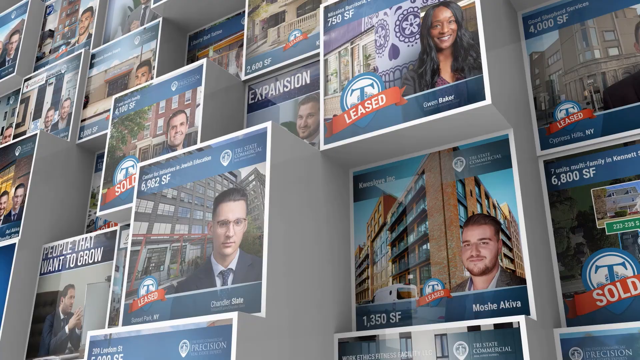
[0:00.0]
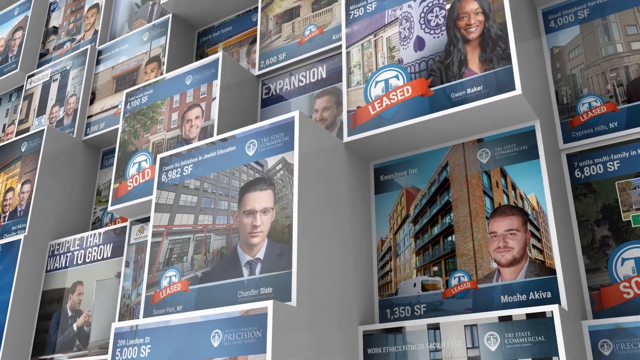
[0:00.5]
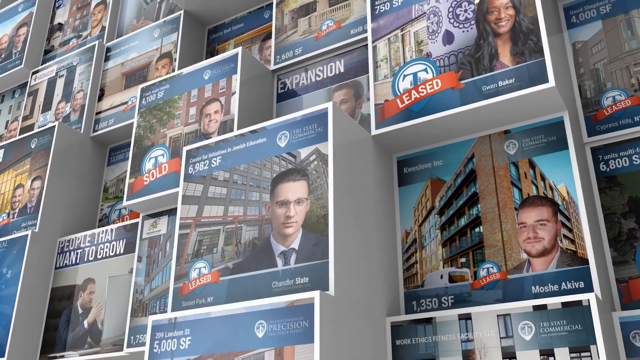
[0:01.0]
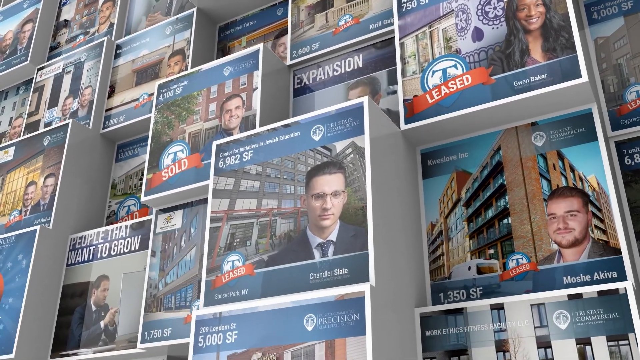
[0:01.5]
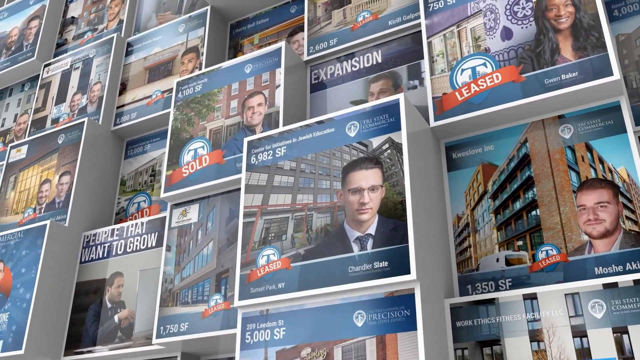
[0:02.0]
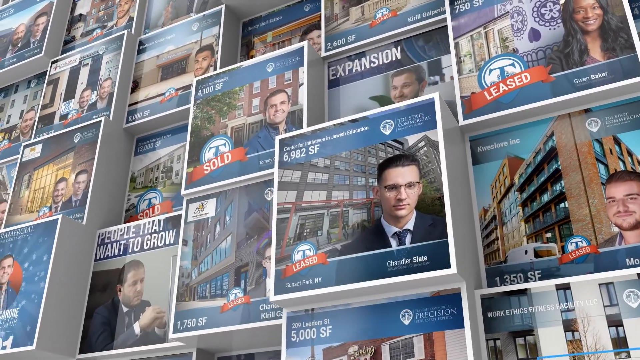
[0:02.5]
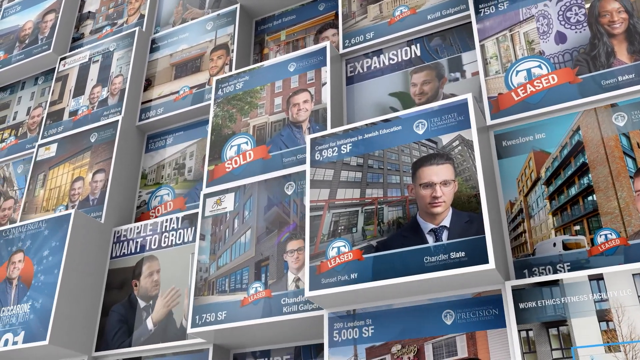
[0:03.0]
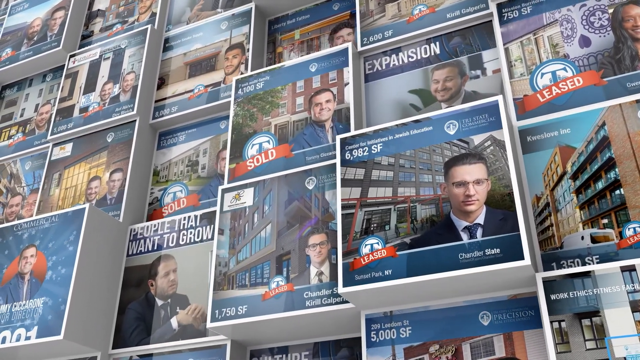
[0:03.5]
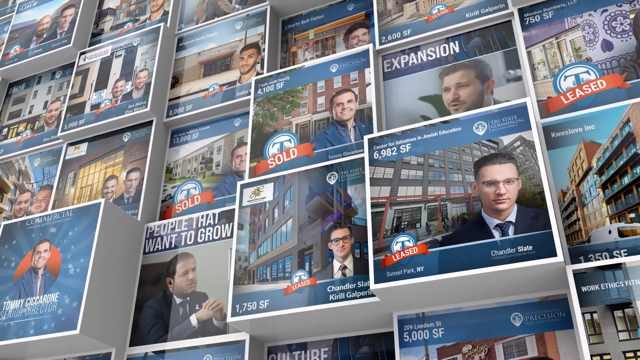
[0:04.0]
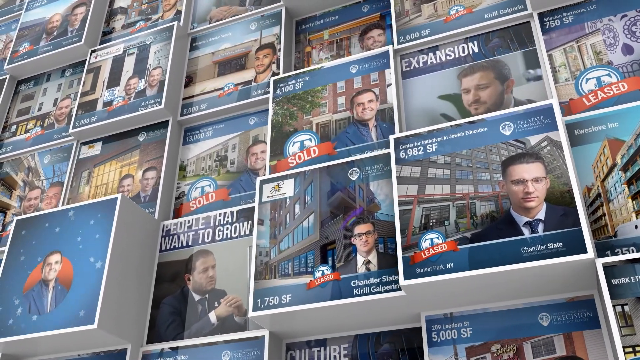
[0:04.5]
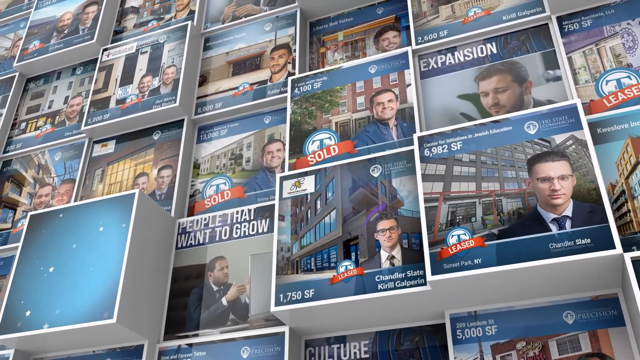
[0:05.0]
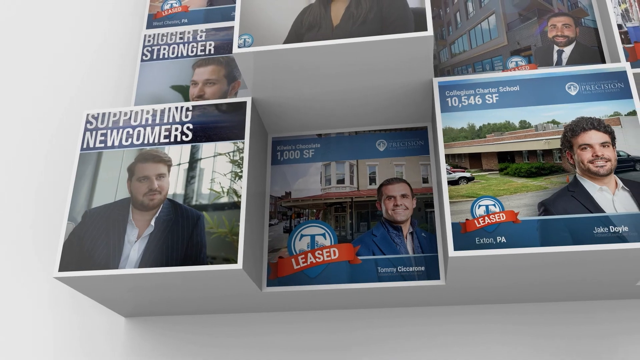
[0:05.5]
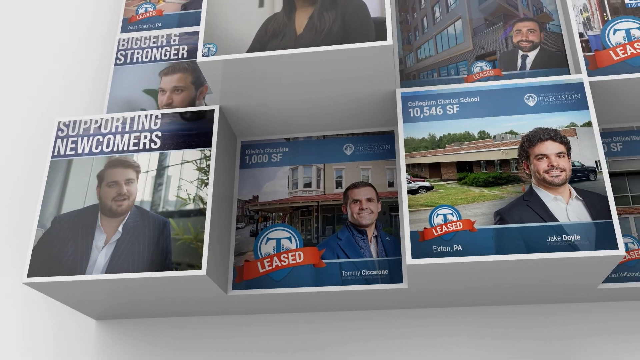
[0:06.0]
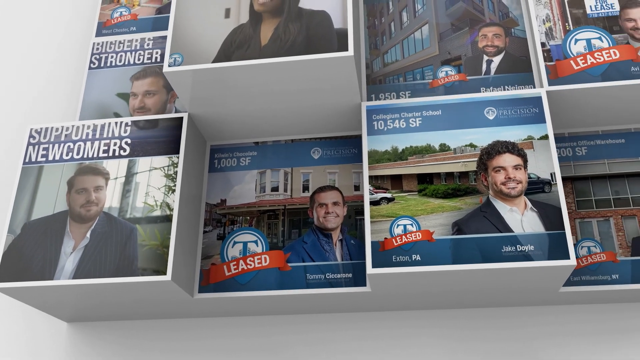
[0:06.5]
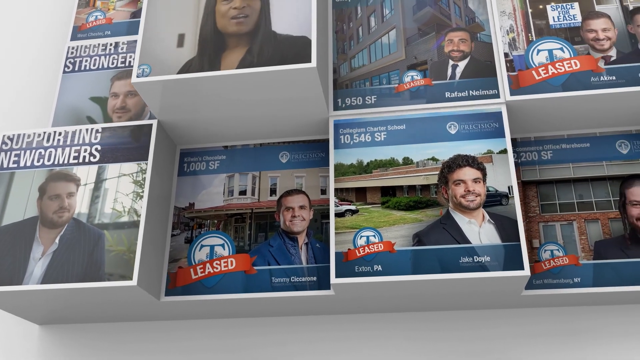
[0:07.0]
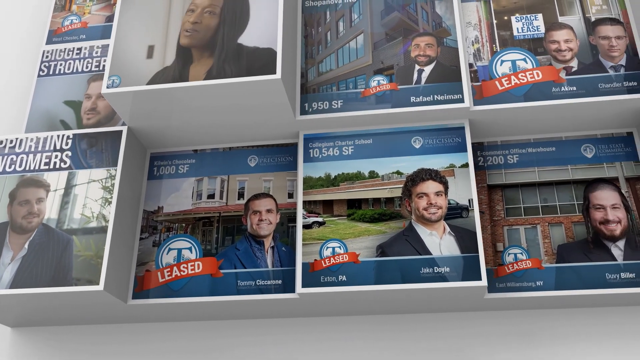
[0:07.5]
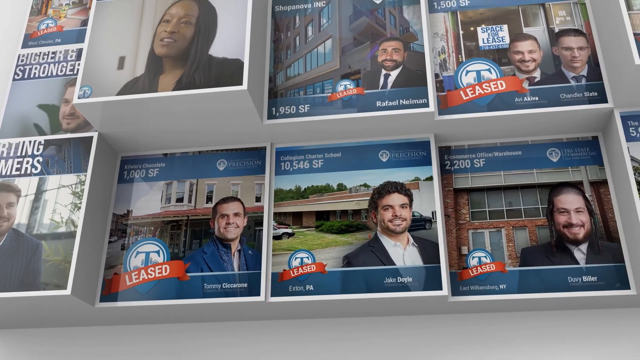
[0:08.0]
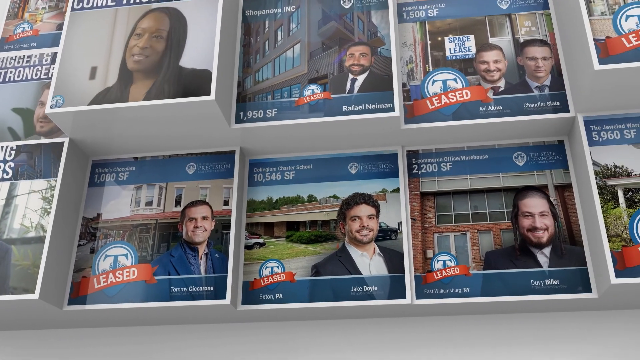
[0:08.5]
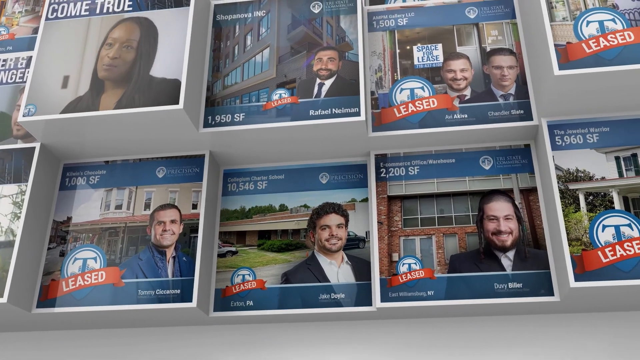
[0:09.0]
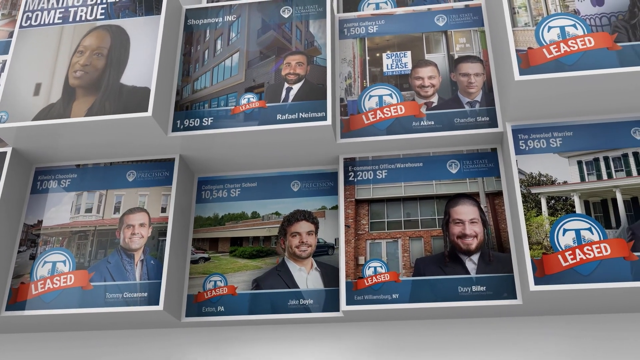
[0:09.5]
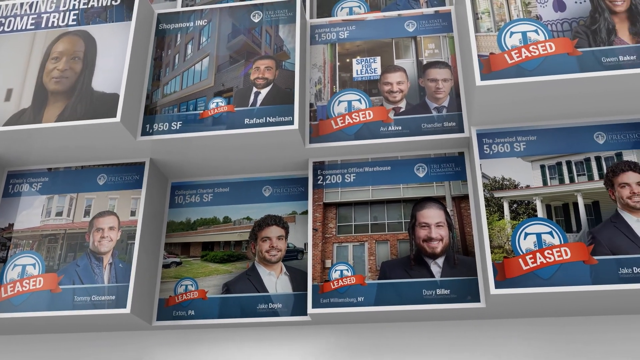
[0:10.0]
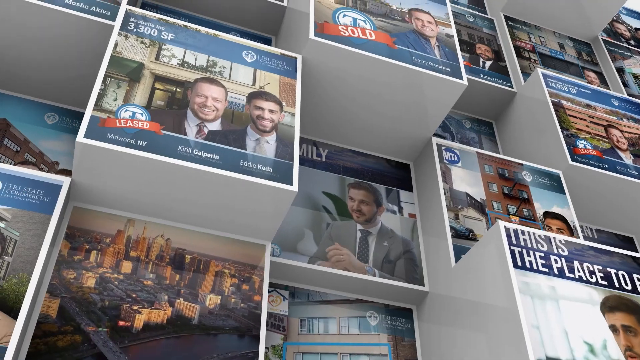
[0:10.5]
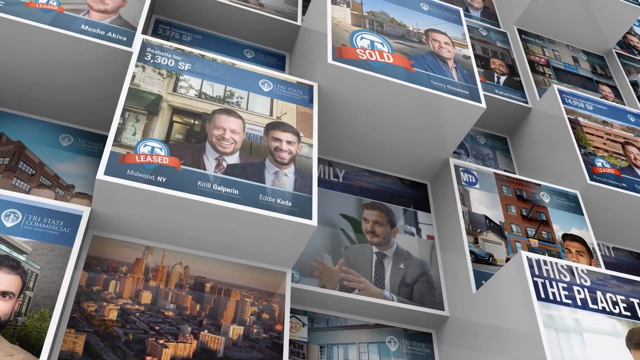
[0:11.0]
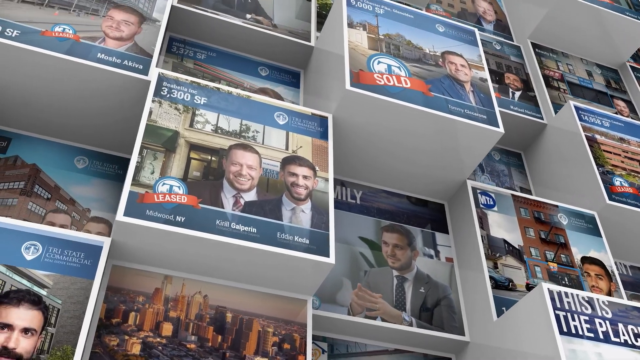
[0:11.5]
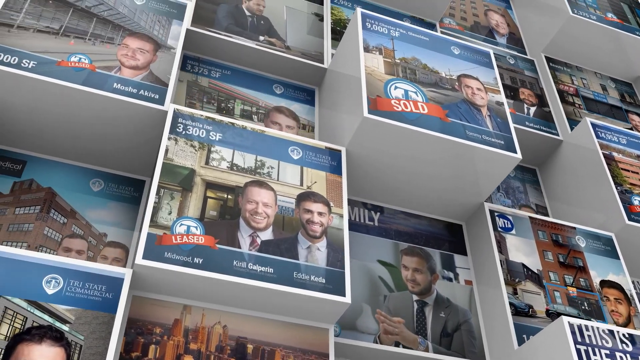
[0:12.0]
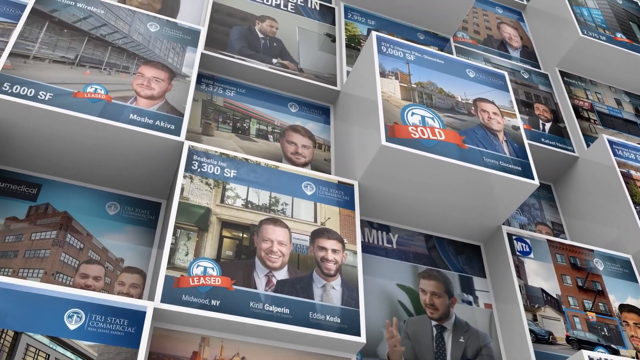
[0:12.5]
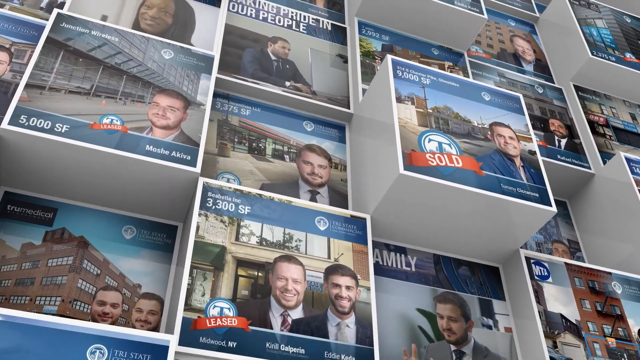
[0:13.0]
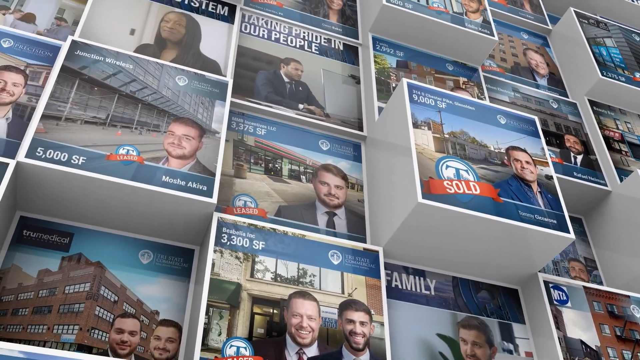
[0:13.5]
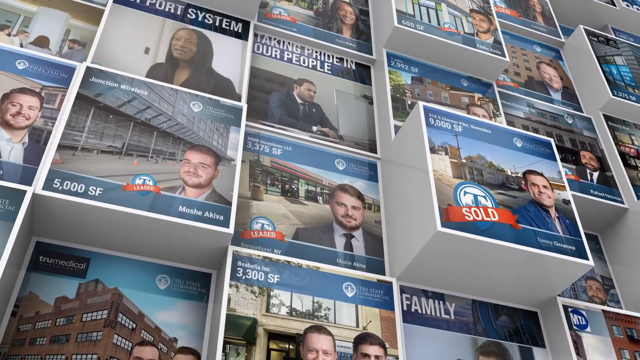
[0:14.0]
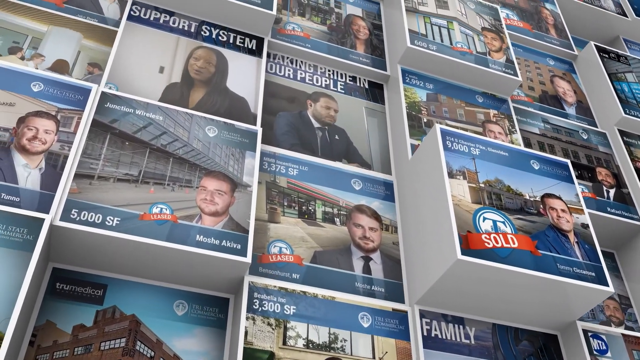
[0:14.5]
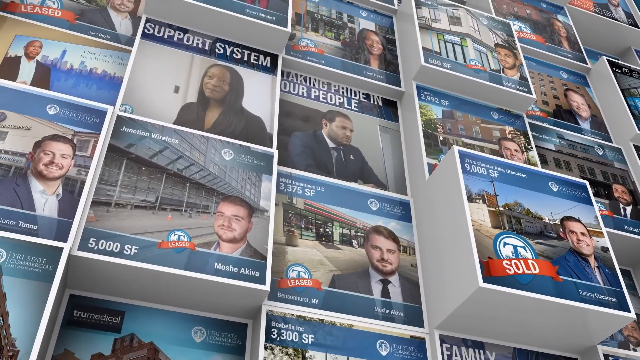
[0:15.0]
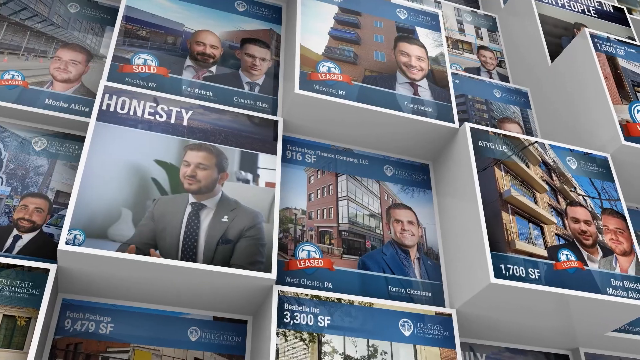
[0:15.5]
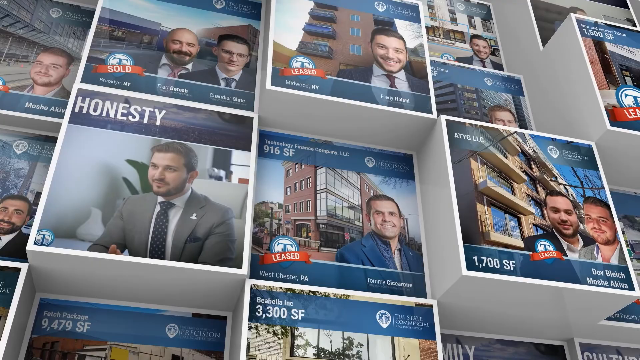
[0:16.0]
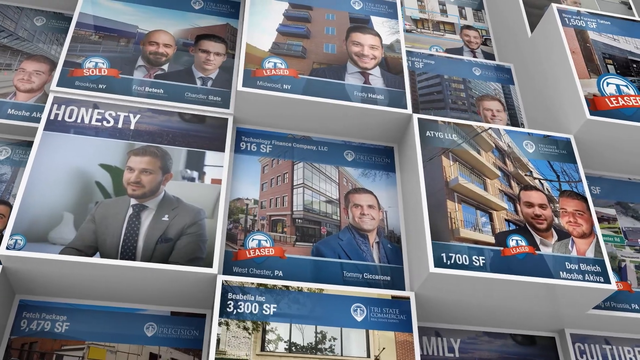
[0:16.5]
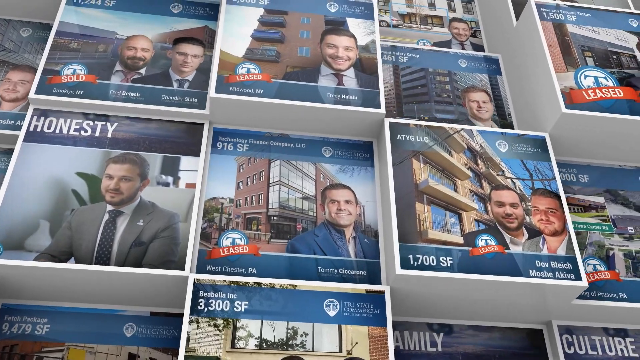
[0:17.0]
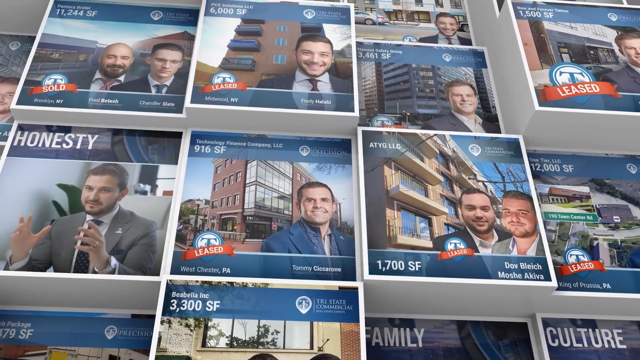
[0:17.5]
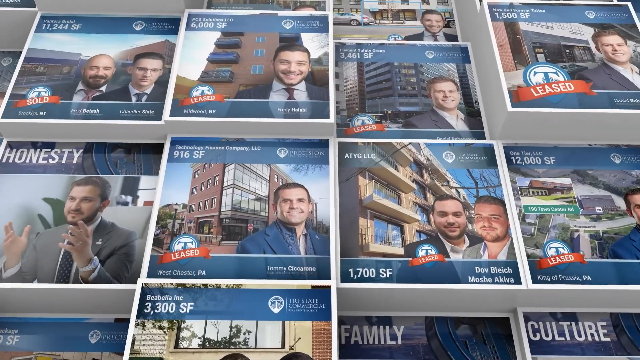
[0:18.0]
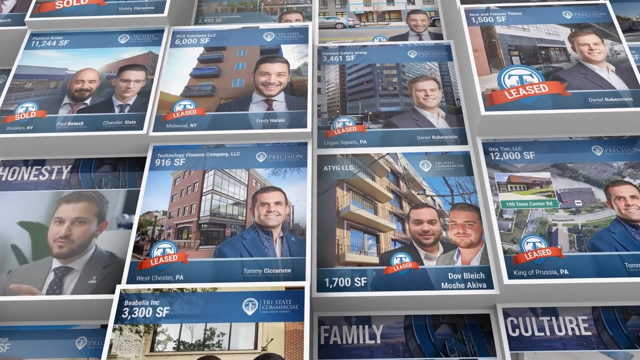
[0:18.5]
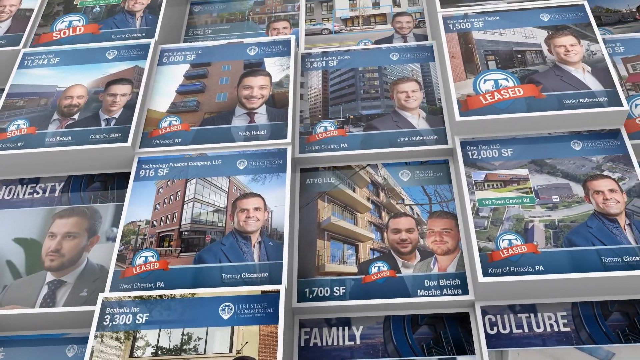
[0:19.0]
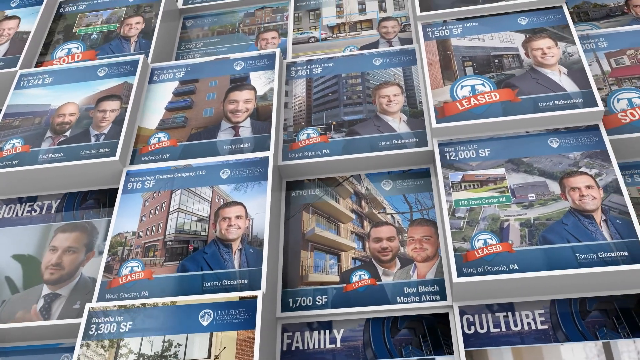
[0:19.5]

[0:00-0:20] A series of digital posters shows a variety of different people, men and women, who have probably sold some sort of real estate for a company. Depending on the poster, a red banner says "leased" or "sold." Some of the posters show apartment buildings, and possibly all of them show apartments, though there could be a few homes or businesses as well. Not every poster has the banner; a few are without the red banner.